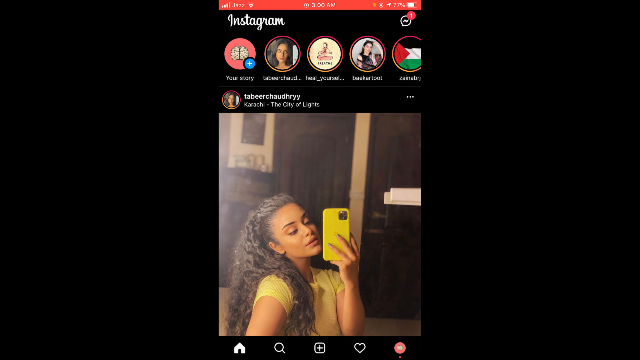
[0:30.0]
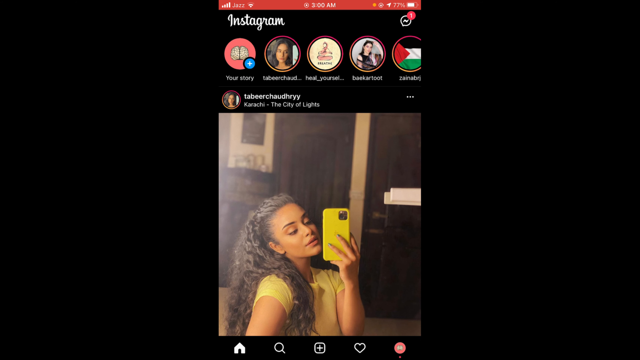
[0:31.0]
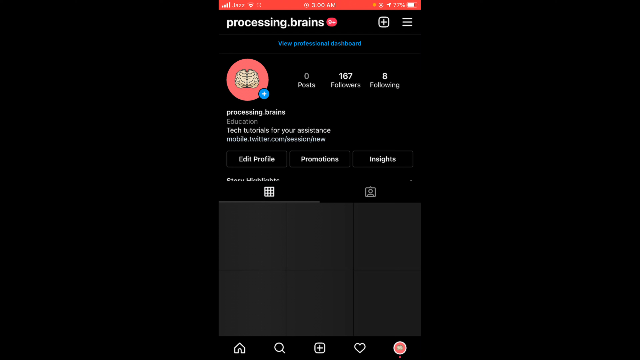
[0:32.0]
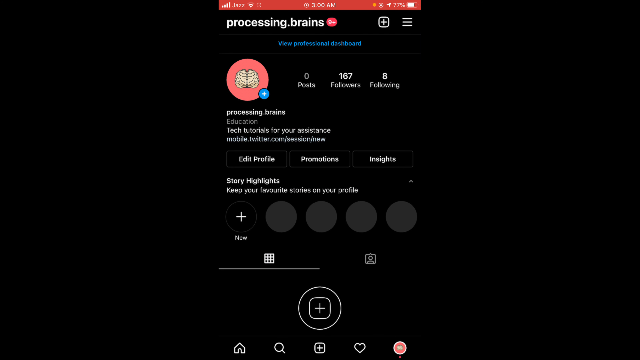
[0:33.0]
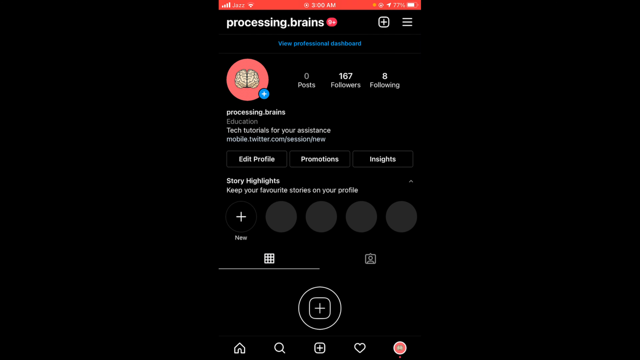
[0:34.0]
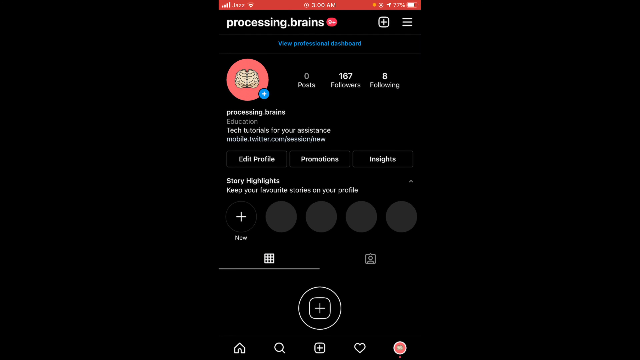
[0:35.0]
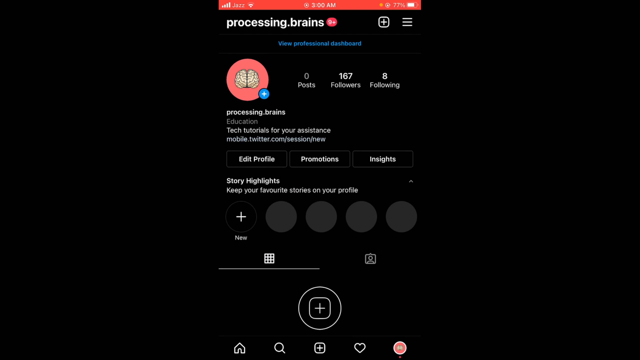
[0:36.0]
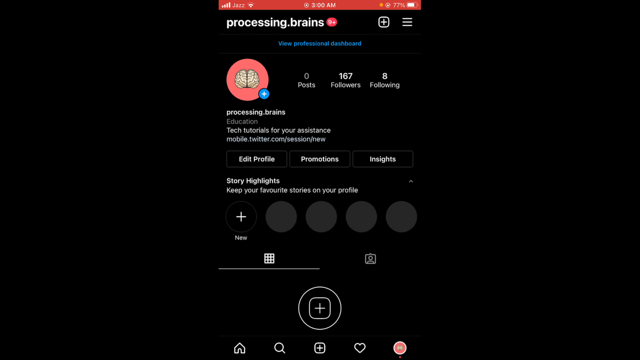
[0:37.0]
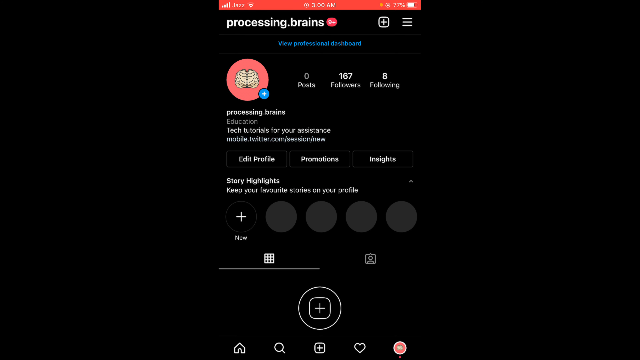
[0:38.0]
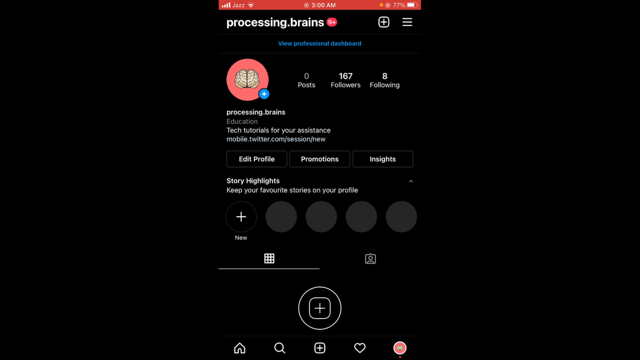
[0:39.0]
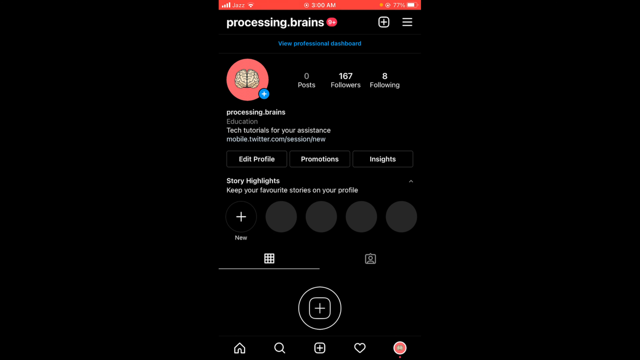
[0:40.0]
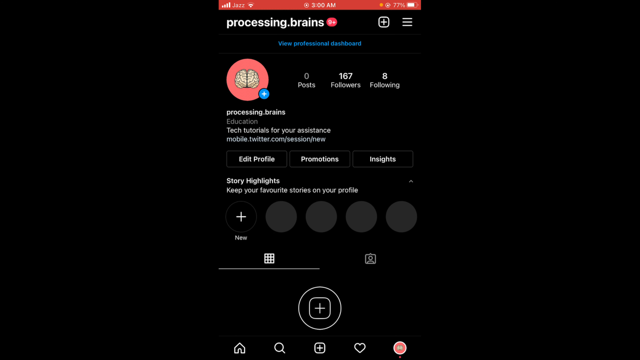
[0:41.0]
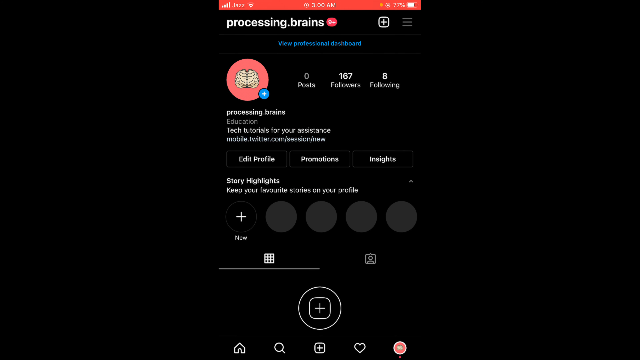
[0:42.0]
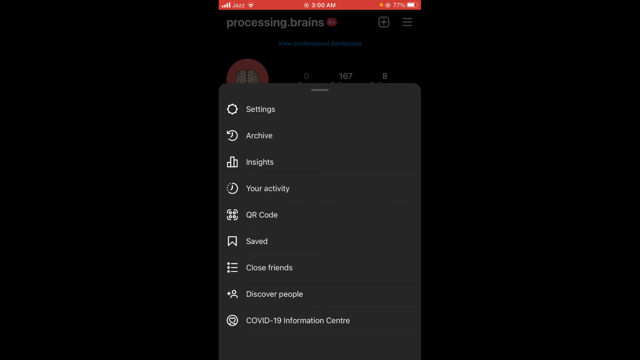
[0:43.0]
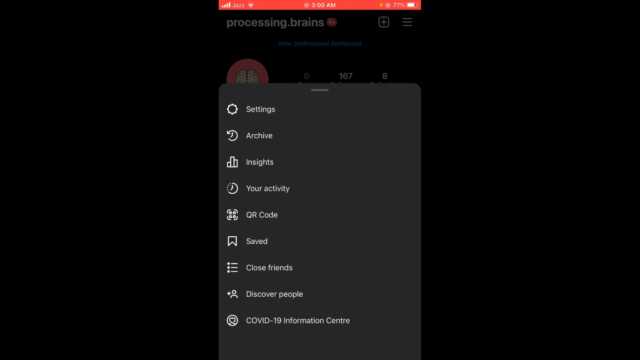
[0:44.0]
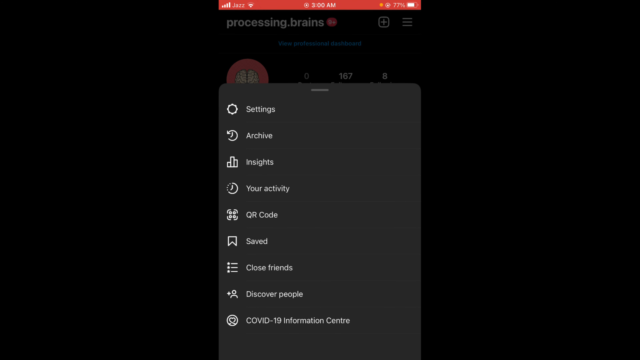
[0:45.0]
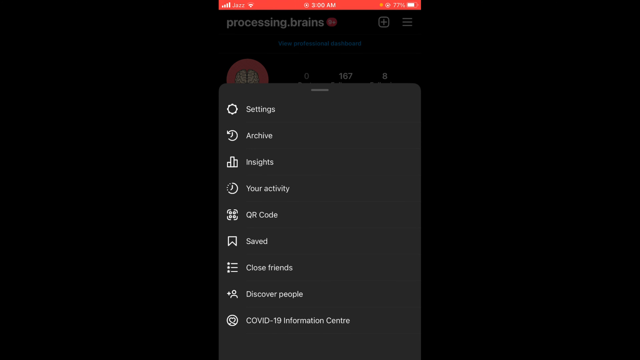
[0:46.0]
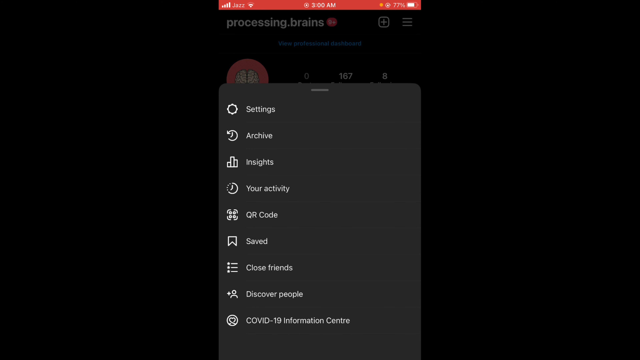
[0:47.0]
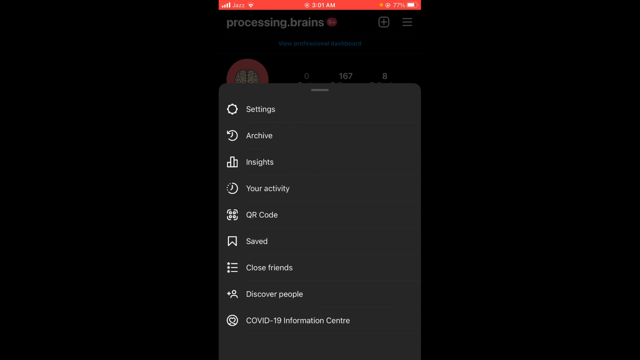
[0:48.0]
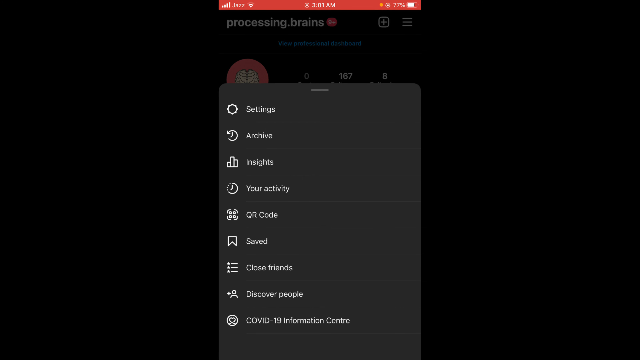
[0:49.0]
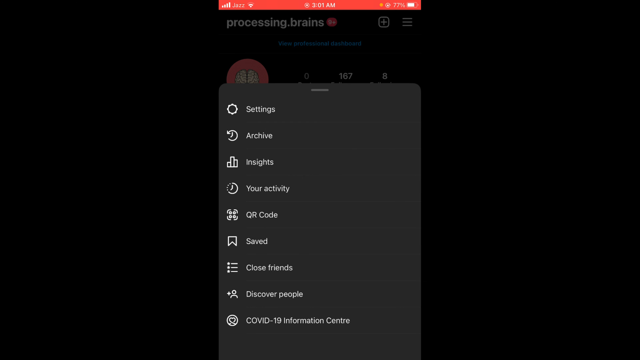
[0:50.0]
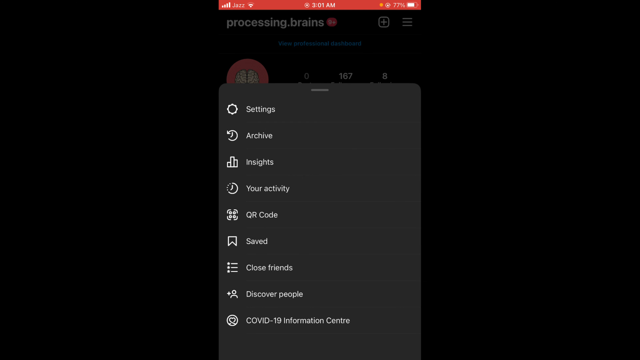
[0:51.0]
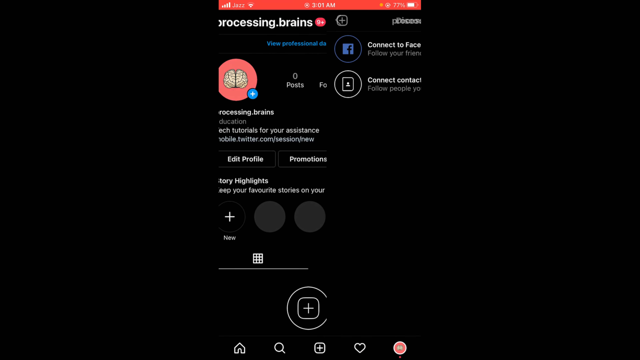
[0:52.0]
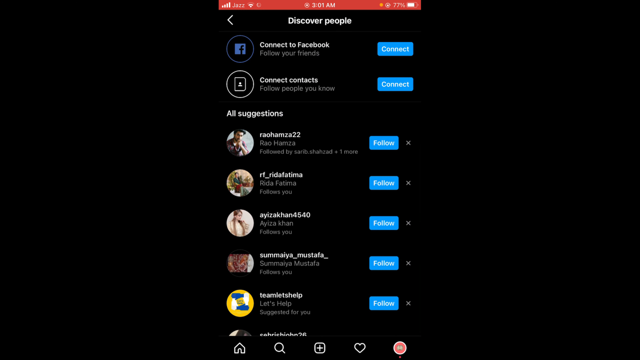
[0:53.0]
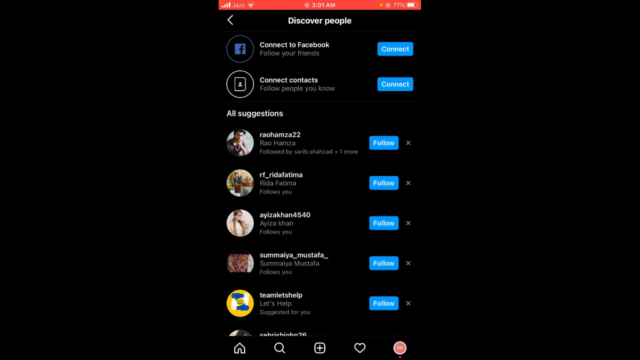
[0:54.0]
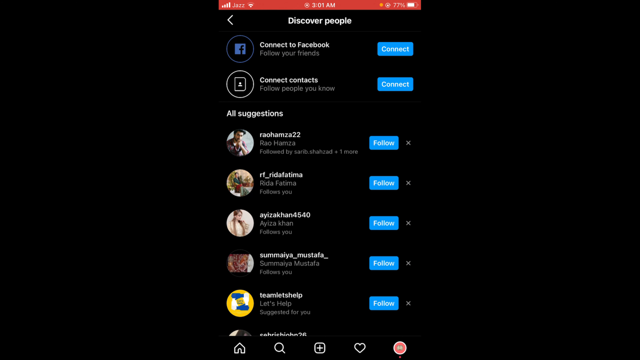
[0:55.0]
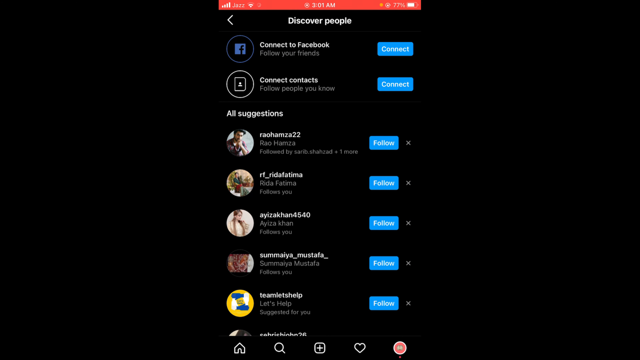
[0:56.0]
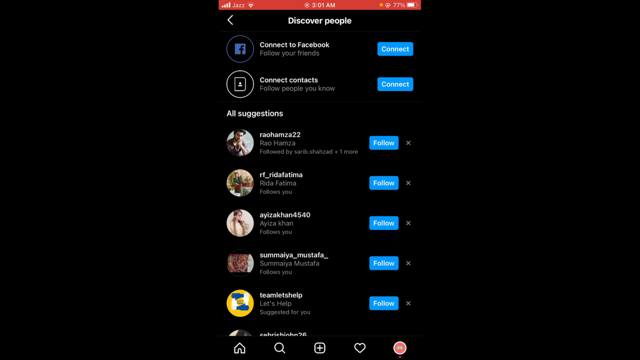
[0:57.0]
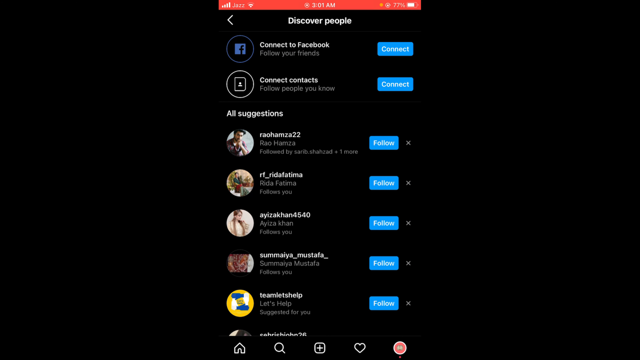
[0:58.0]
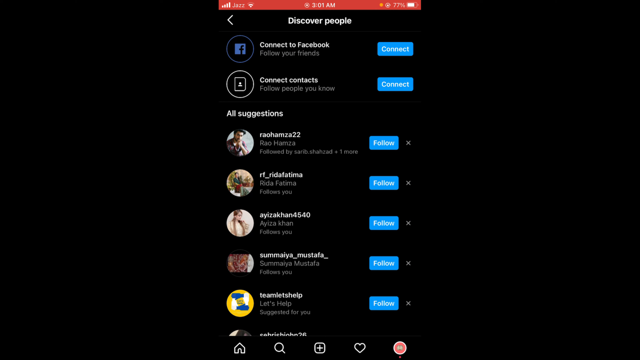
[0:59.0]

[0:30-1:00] The phone screen is being recorded with Instagram open, showing a total of five Instagram stories at the top and a picture of a young lady. She has a yellow phone, appears to be Hispanic, and wears a yellow shirt; her hair is very long and very curly and pulled back. The view then apparently moves to a screen called "processing.brains," which appears to be their profile page. The page looks like it has no posts, and the menu is opened. The menu is closed and the Discover People screen appears. The view then returns to the photo of the young lady with the yellow phone and the long curly hair pulled back. Instagram appears to be in dark mode, and the Instagram app apparently has one message showing on the screen.